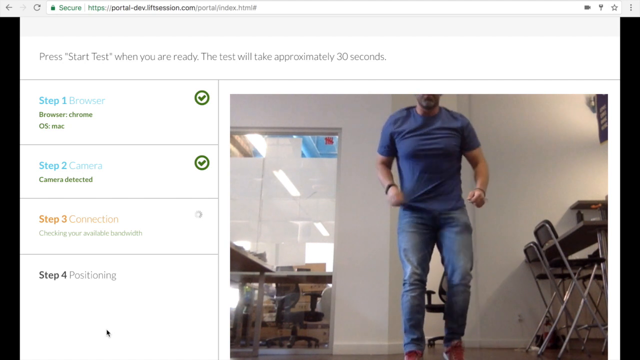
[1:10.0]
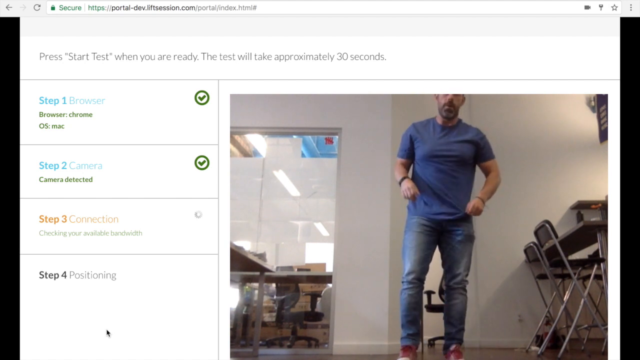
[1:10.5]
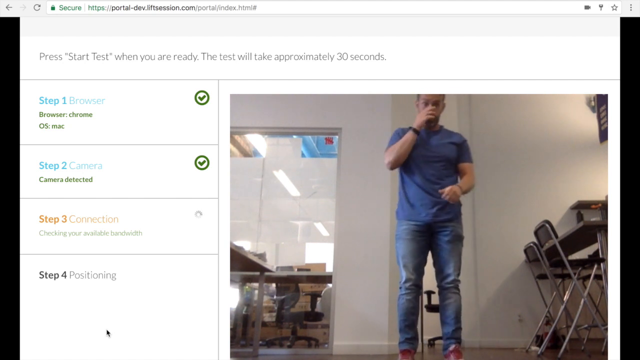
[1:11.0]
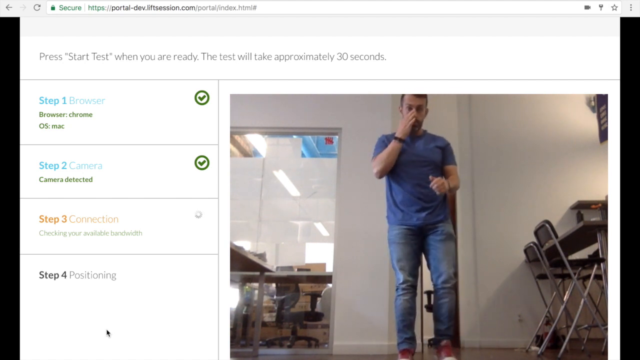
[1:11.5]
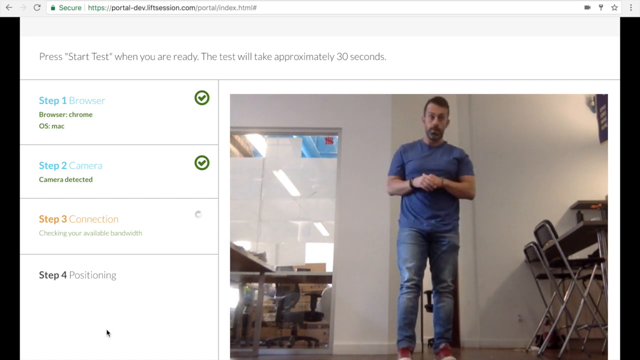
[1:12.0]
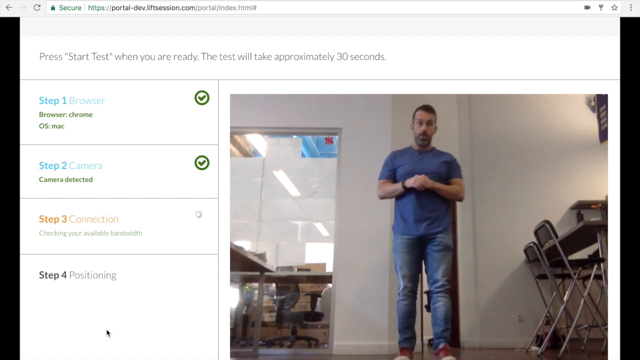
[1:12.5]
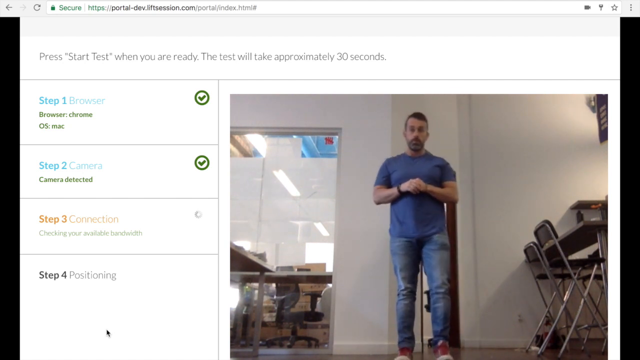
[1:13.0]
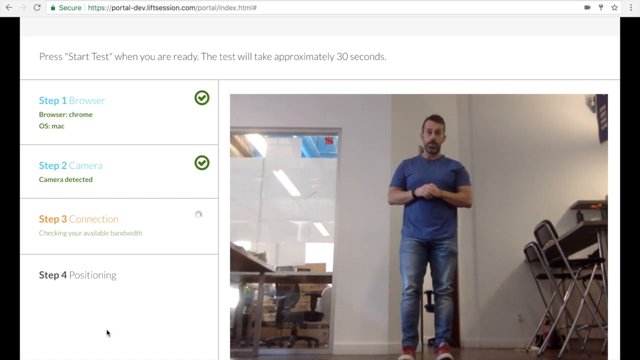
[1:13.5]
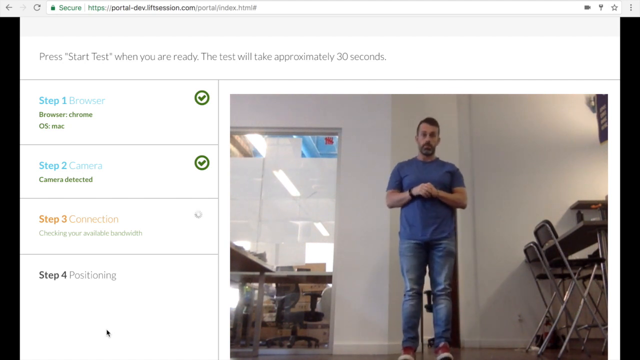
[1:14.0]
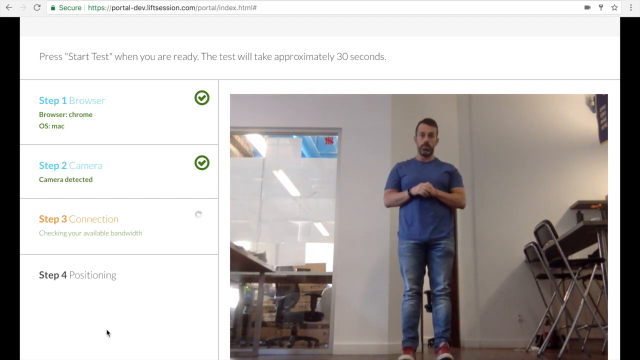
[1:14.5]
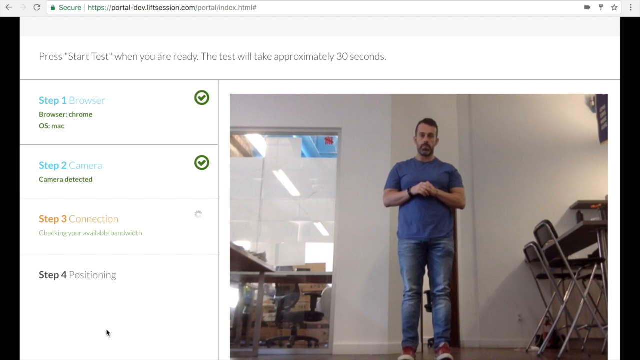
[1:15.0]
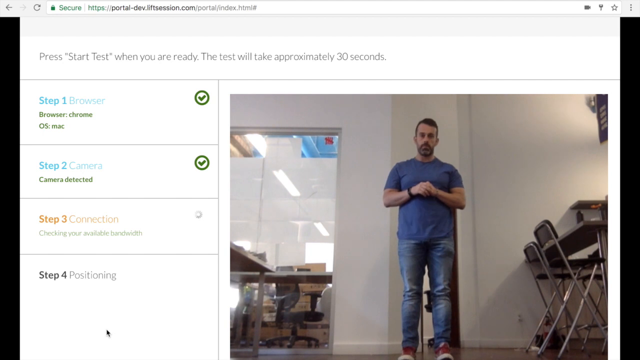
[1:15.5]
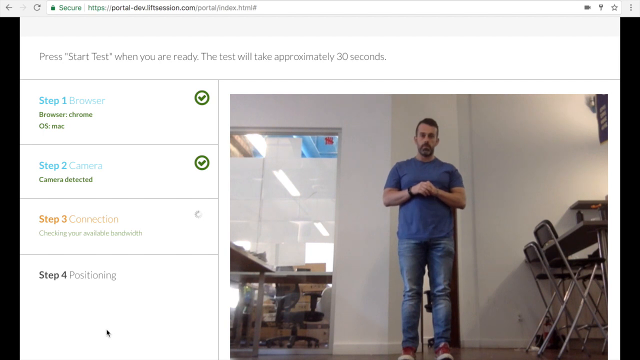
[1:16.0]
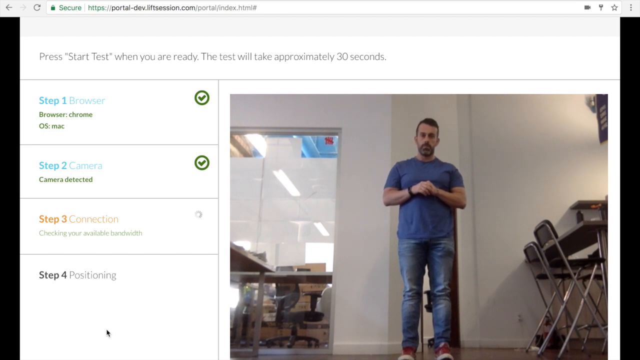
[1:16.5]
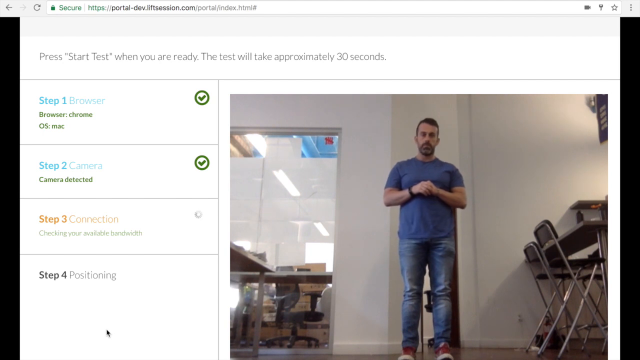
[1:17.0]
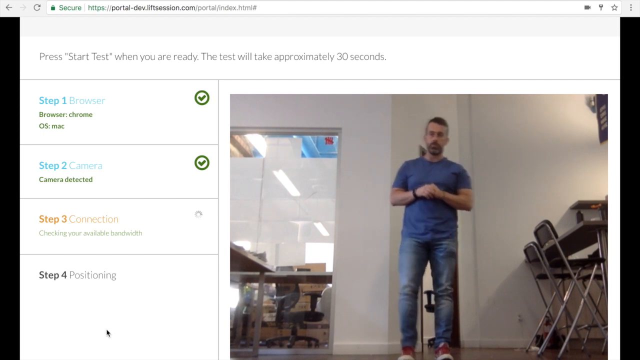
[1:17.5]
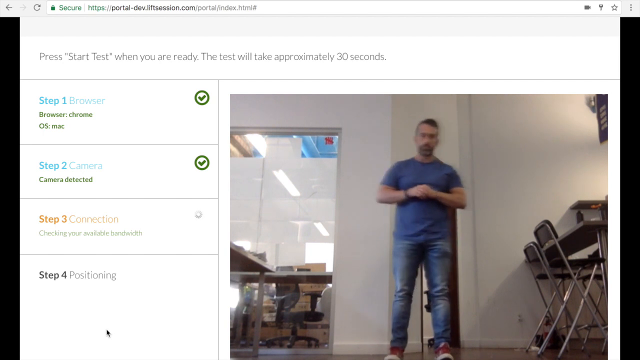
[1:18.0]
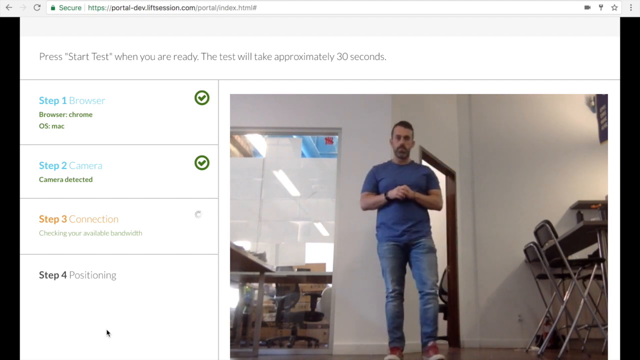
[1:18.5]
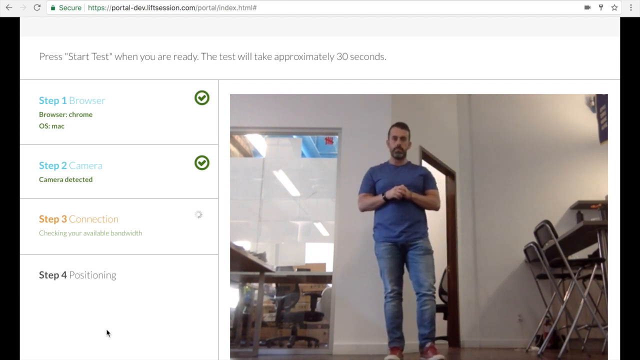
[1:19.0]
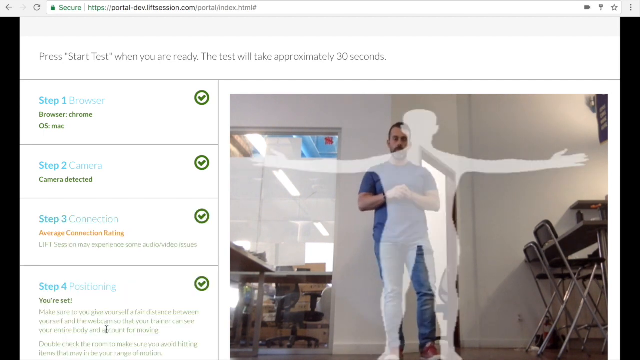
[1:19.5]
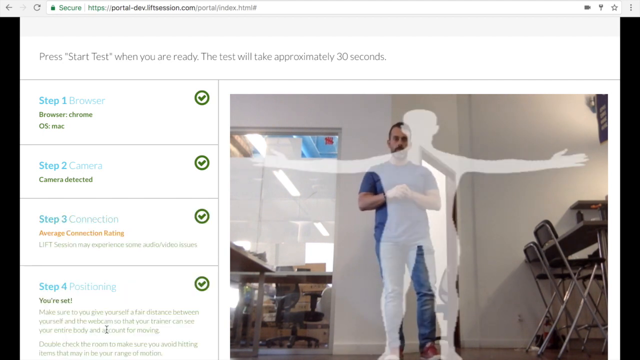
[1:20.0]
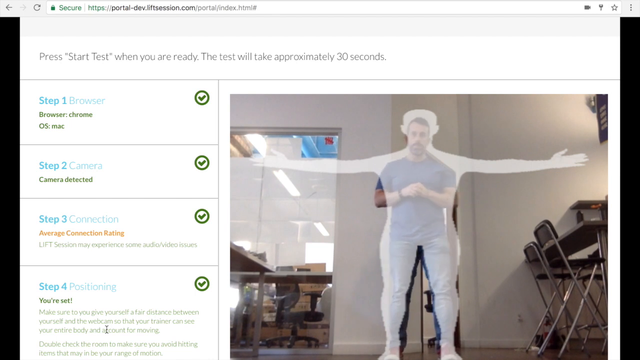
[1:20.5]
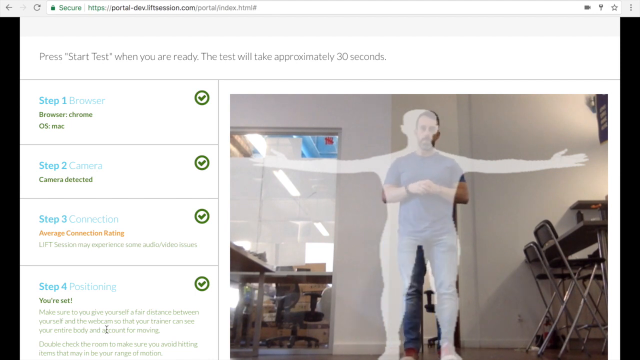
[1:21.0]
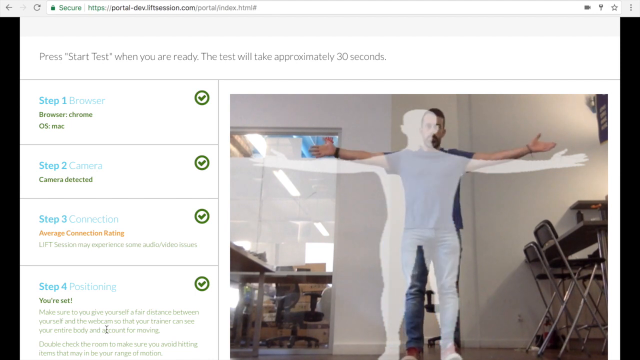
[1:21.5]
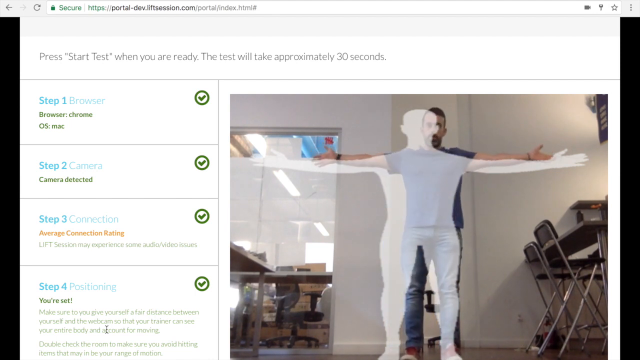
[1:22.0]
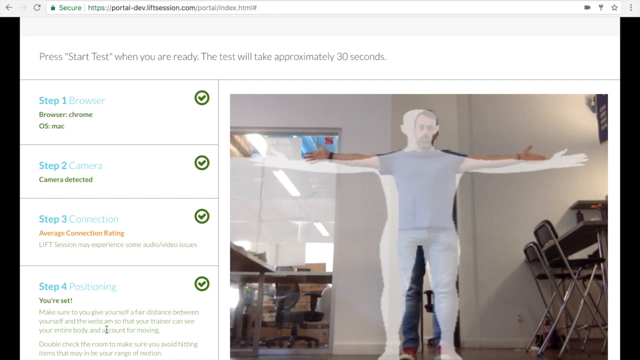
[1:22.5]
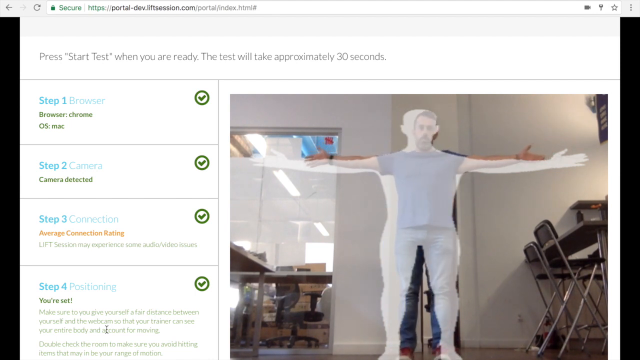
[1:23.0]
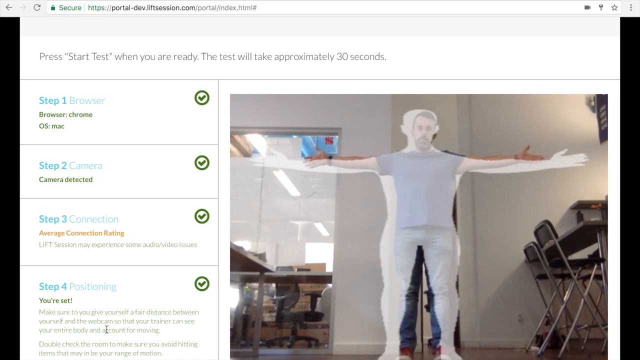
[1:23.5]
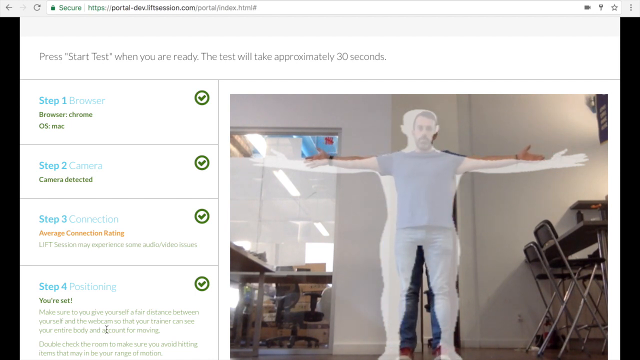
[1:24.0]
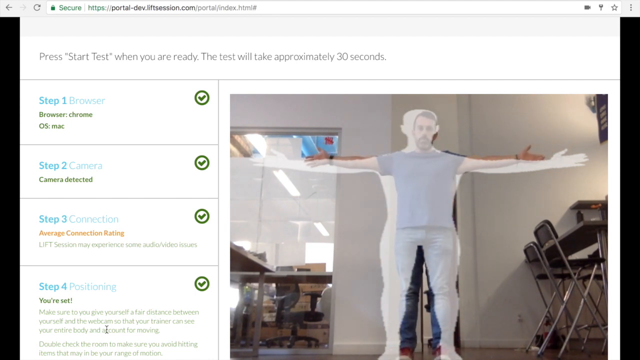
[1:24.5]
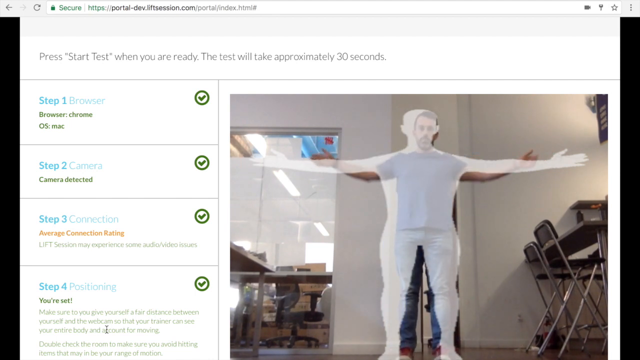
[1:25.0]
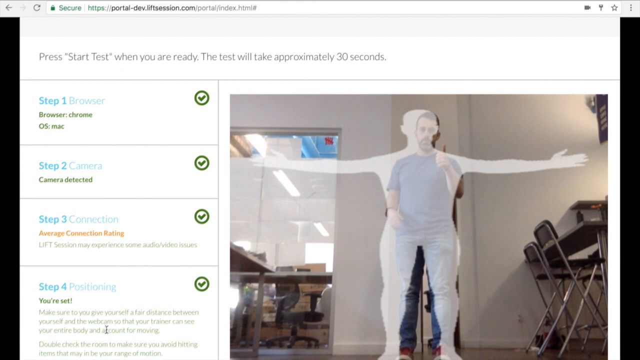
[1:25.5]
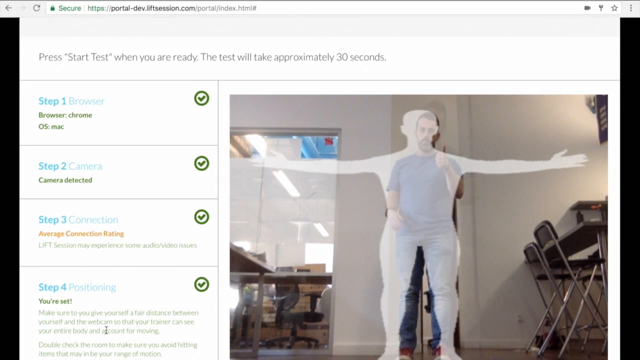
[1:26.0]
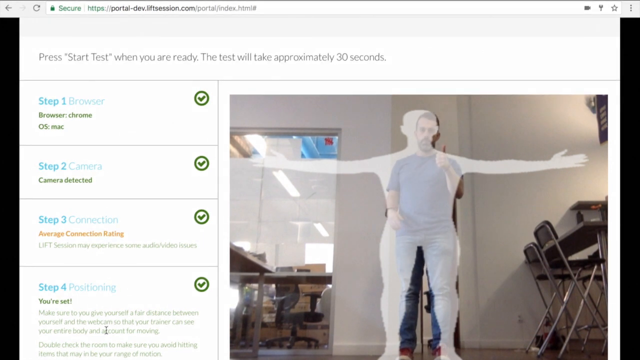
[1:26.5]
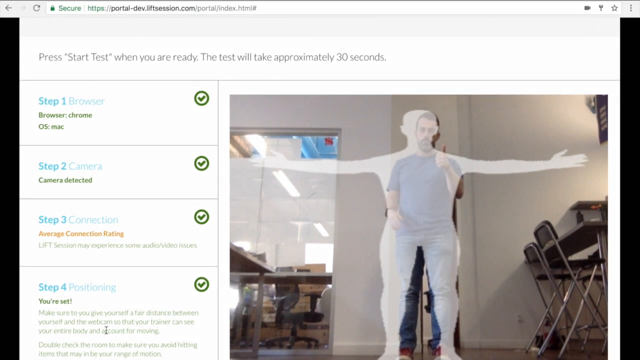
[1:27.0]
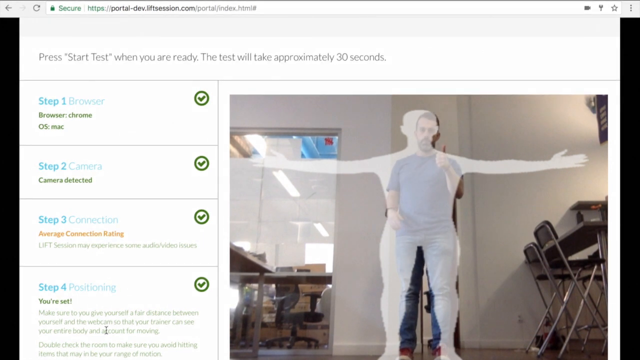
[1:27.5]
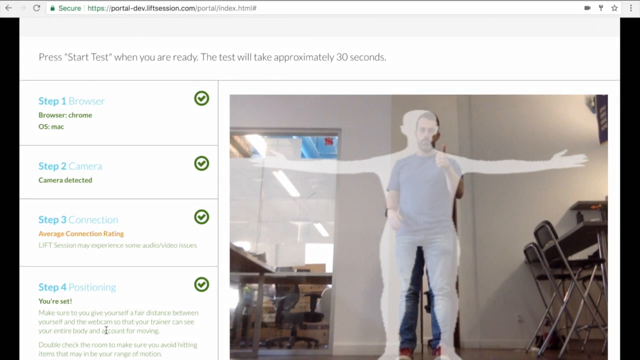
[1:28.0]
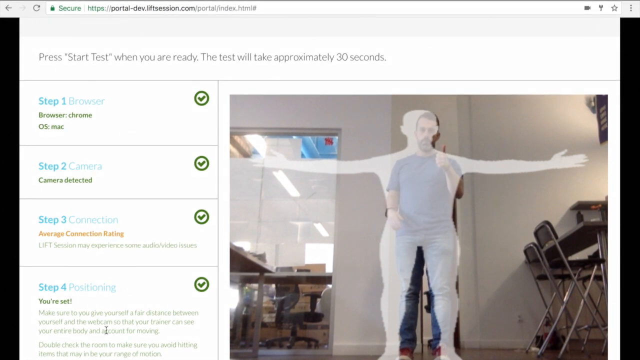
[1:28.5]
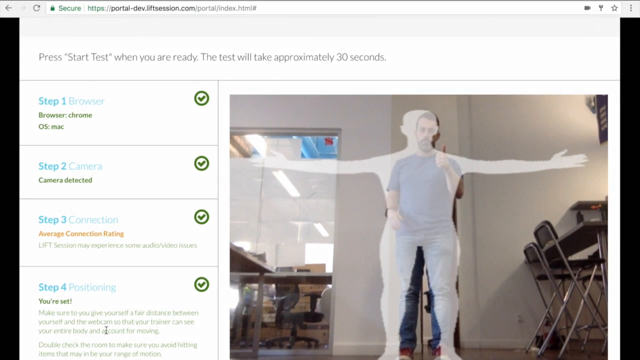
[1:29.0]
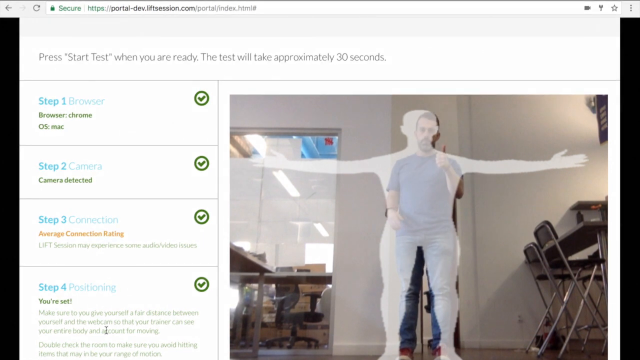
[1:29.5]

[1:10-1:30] The white web page still shows gray text at the top: "press start test when you are ready. The test will take approximately 30 seconds." On the left are four steps in different colors: Steps 1 and 2 are in blue text with checkmarks on their right, Step 3 is orange and Step 4 is black. On the right, a man stands in a white room with a desk and several chairs to his right. He wears a blue shirt, blue jeans and a black wrist strap or watch on his right wrist. He straightens his shirt, rubs his face with his right hand, and crosses his hands in front of his chest. He takes a few more steps backward and waits a few seconds. A grey overlay of a person T-posing appears in the middle of the camera or stream on the right. The man mimics it, spreading his legs a little and raising his arms straight out at his sides at shoulder level, head straight and looking forward. The text for Steps 3 and 4 turns blue and gains checkmarks to the right. After a few seconds he drops the pose and raises his left arm to give a thumbs up with his left hand toward the camera.